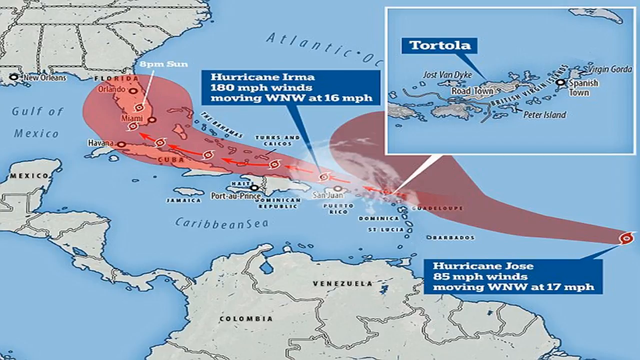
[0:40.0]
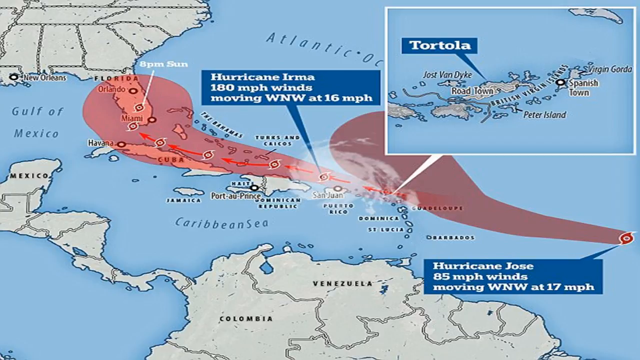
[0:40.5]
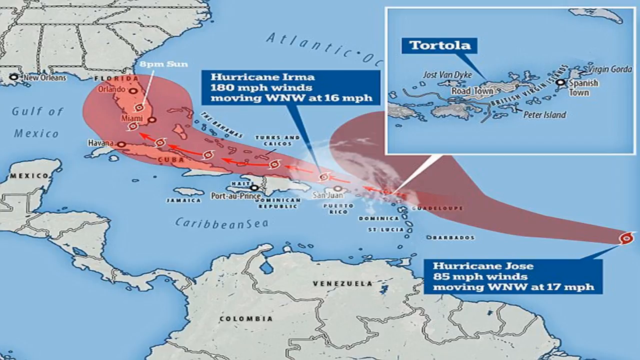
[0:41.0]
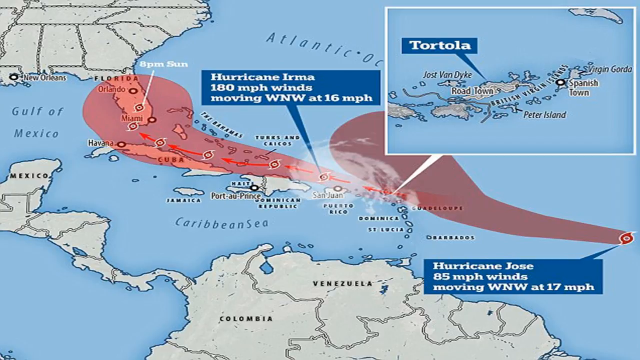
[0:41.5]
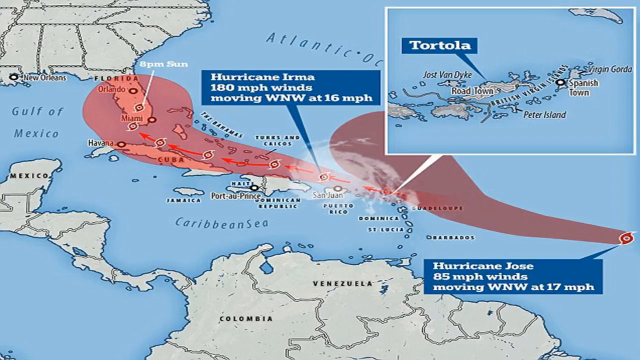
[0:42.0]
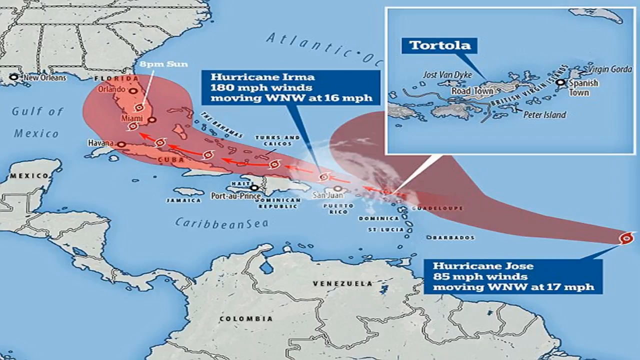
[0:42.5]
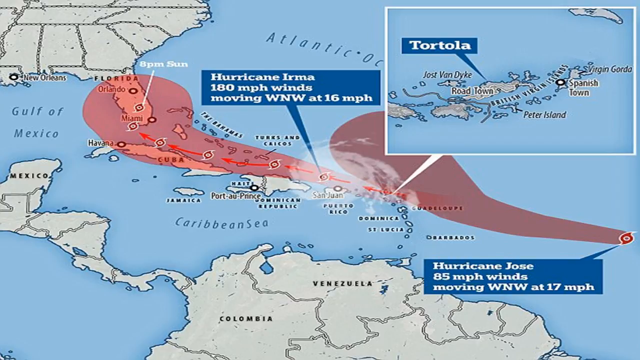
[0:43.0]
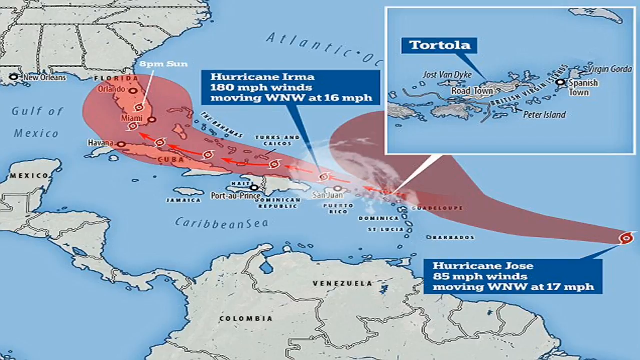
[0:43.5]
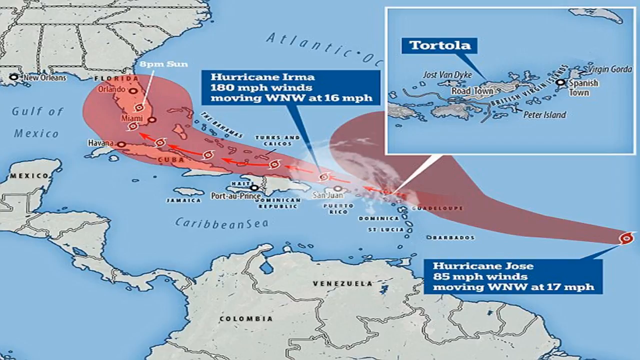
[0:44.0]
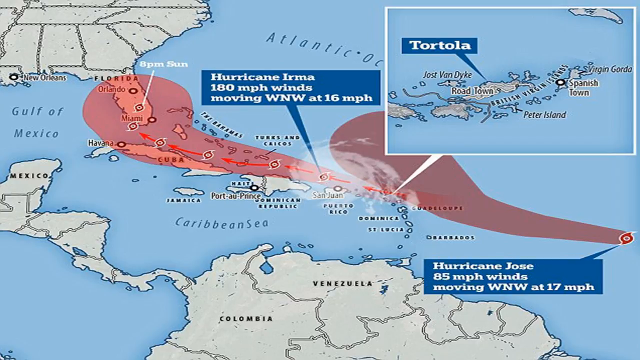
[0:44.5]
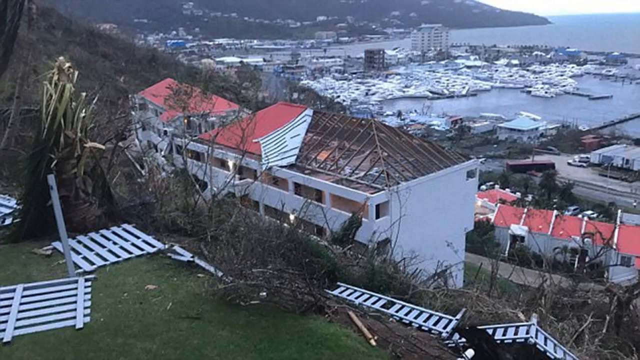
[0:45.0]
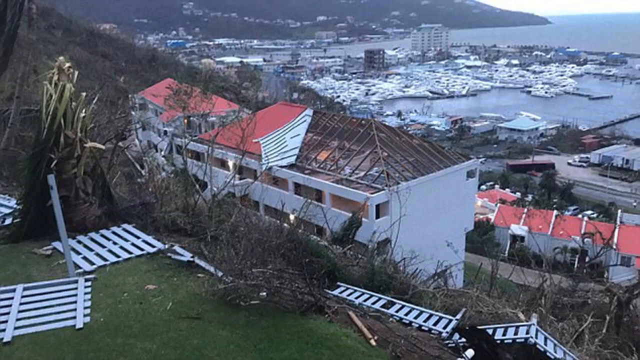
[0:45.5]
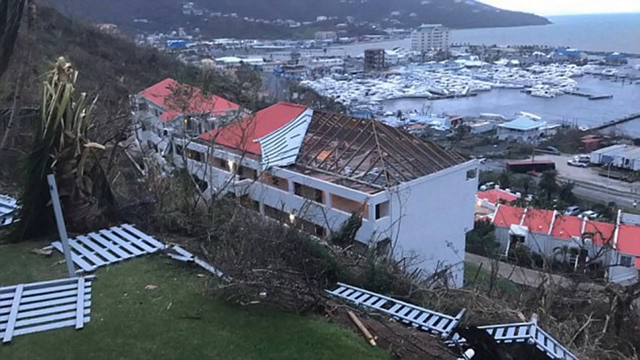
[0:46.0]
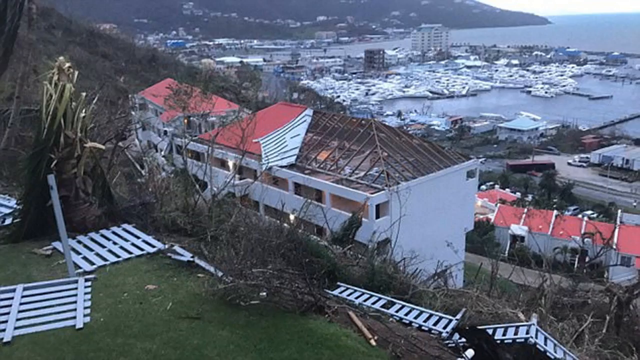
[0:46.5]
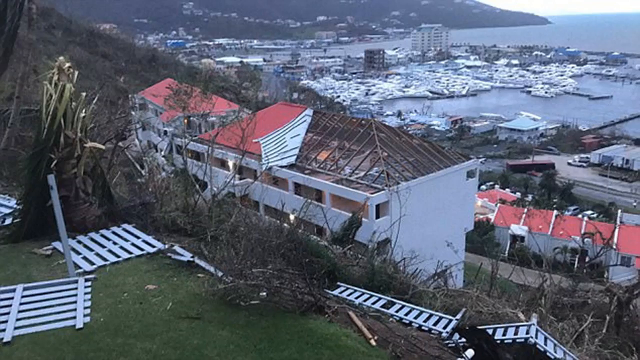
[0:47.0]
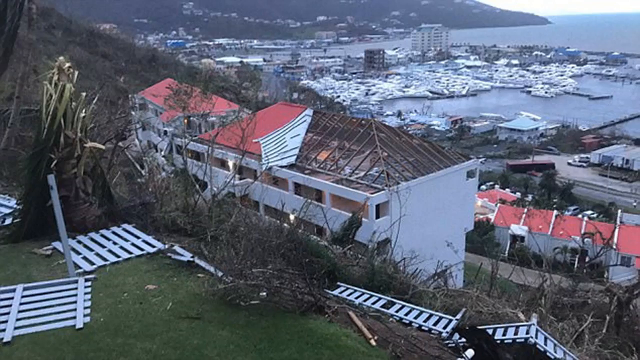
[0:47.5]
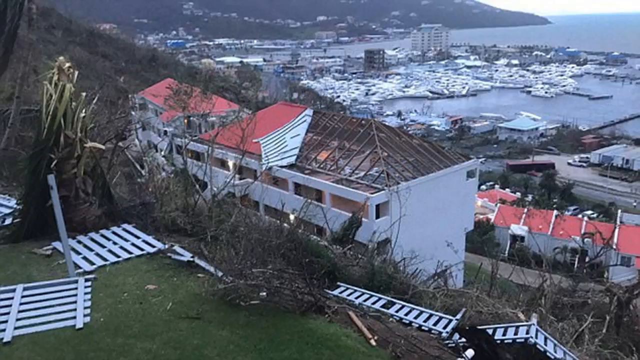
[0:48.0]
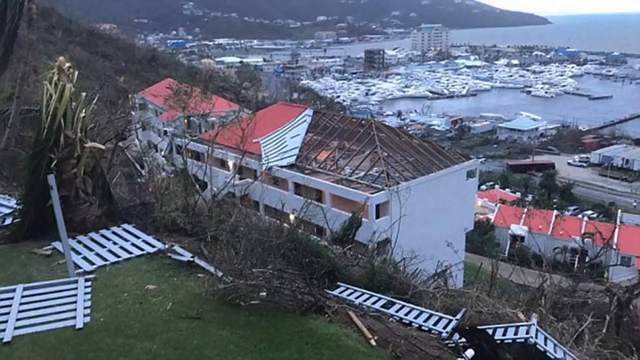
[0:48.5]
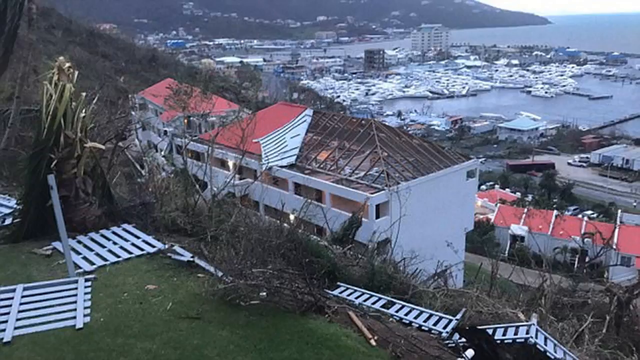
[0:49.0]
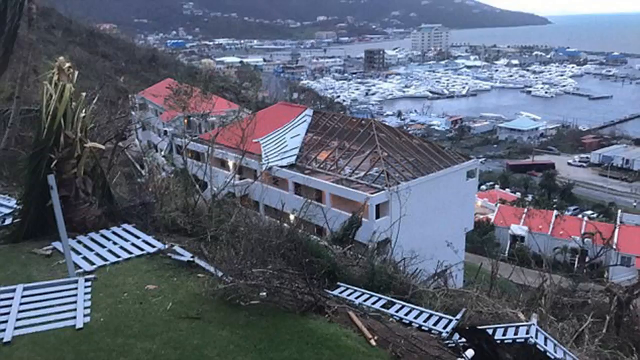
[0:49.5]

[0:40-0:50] A map of lower, roughly middle North America focuses mainly on the Caribbean Sea and its islands, with Florida at the top and South America at the bottom. It shows the trajectories and paths of both Hurricane Irma and Hurricane Jose in red. A caption reads "Hurricane Irma, 180 mph winds moving WNW at 60 mph." The video then transitions to what looks like one of the islands in the aftermath of one of the hurricanes: a photo of what appears to be a beachside town on an island, showing a somewhat damaged building and many fallen trees.